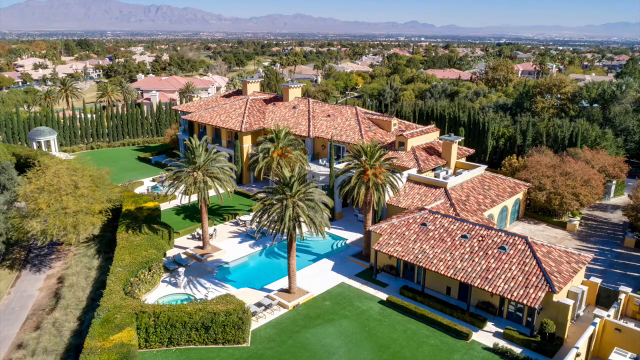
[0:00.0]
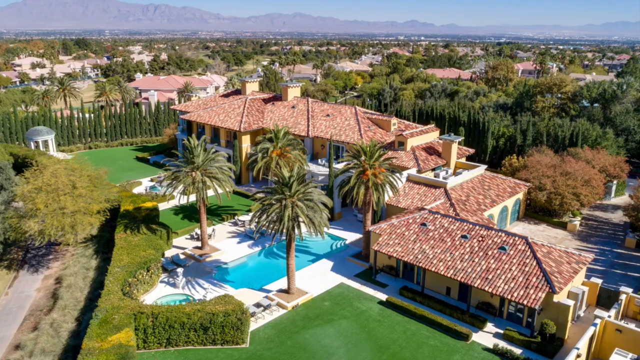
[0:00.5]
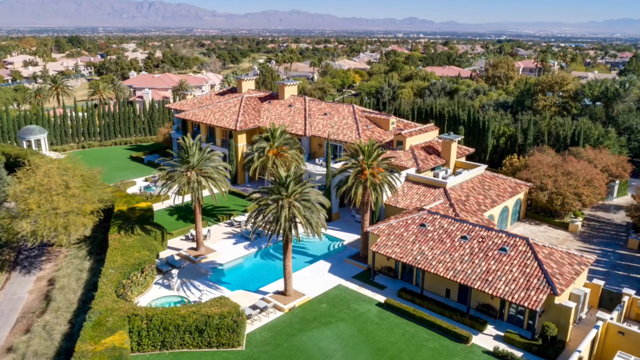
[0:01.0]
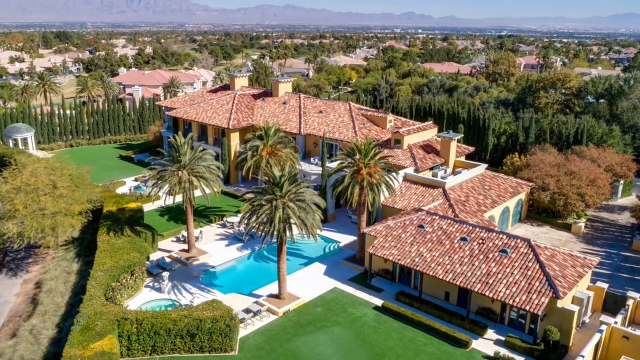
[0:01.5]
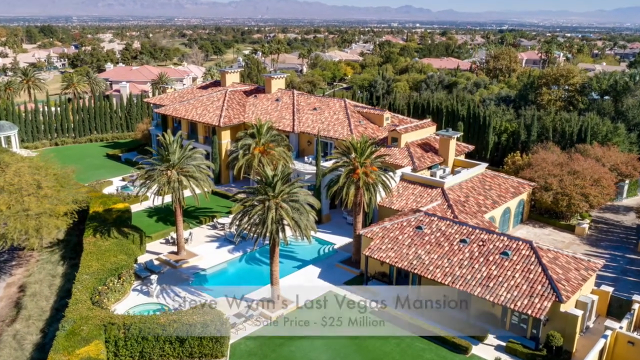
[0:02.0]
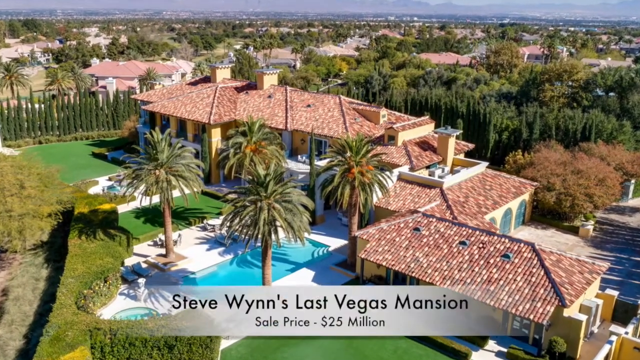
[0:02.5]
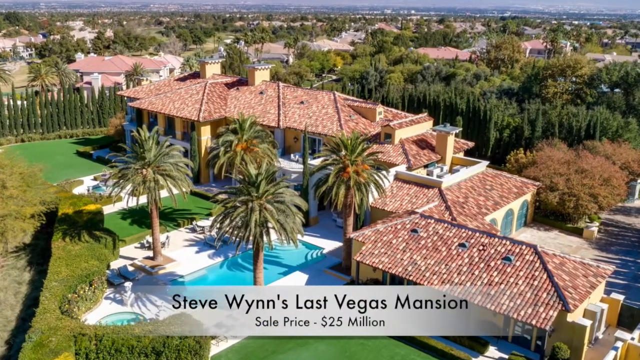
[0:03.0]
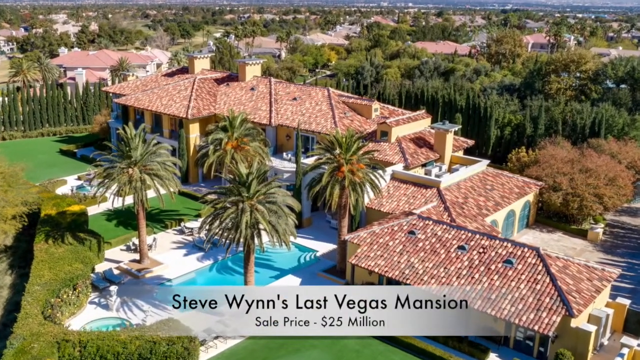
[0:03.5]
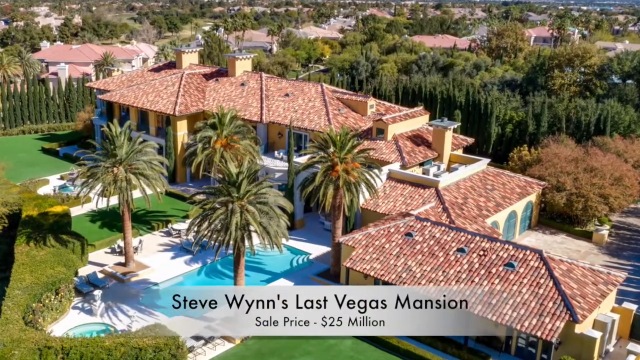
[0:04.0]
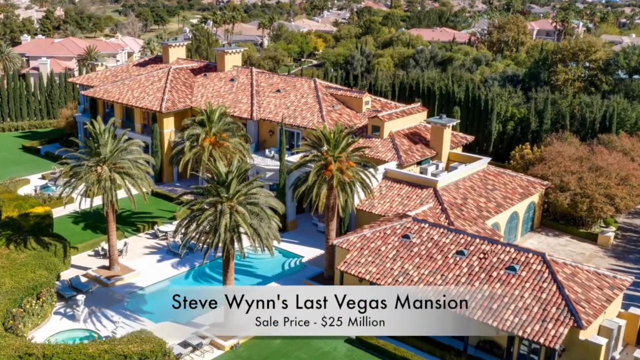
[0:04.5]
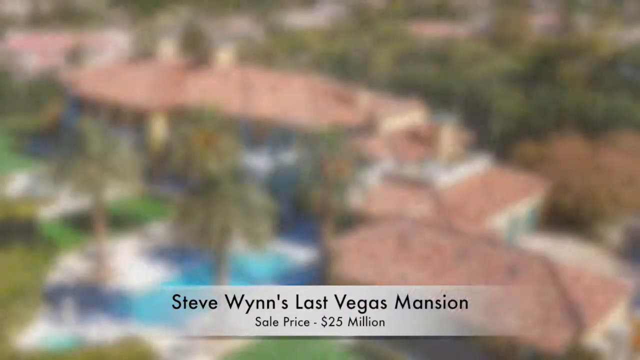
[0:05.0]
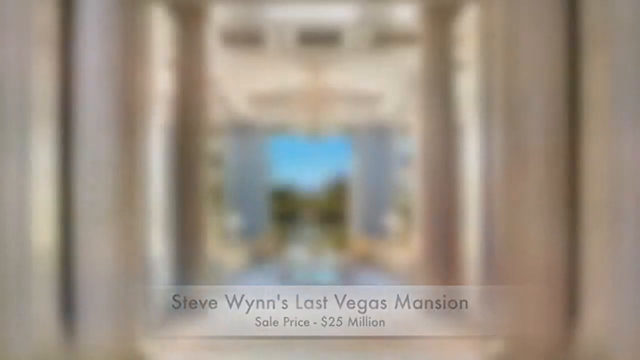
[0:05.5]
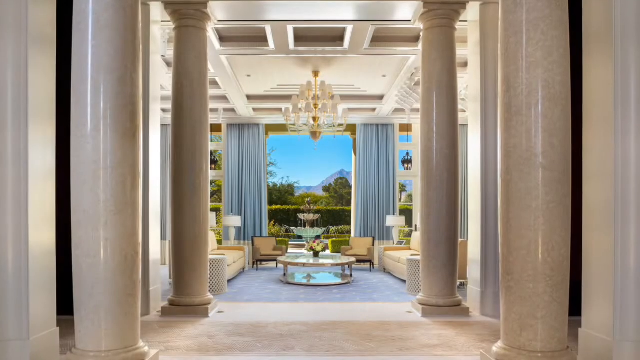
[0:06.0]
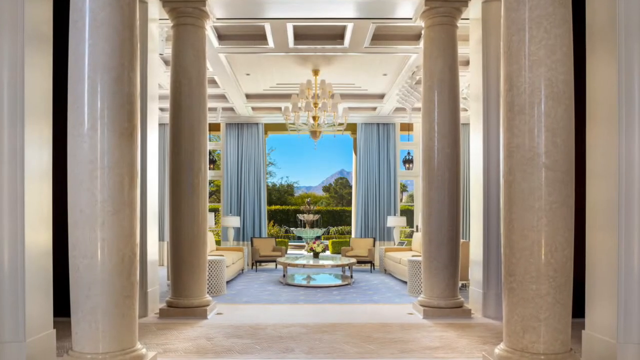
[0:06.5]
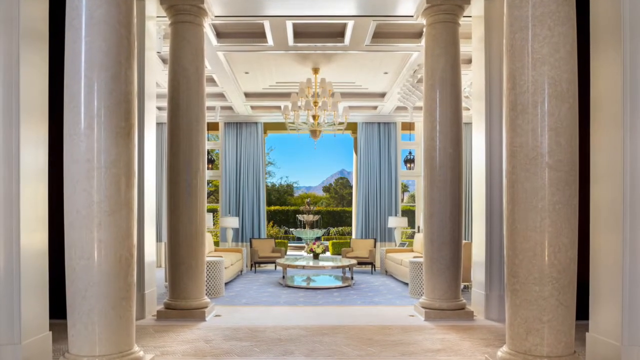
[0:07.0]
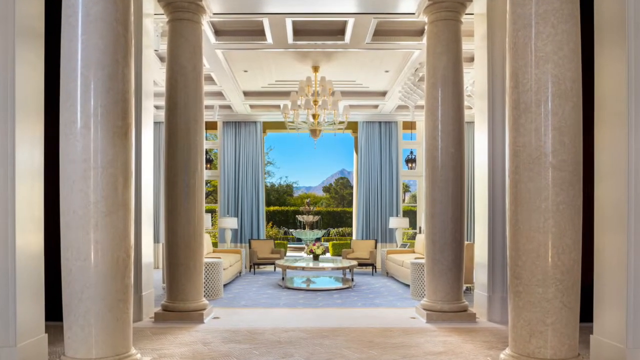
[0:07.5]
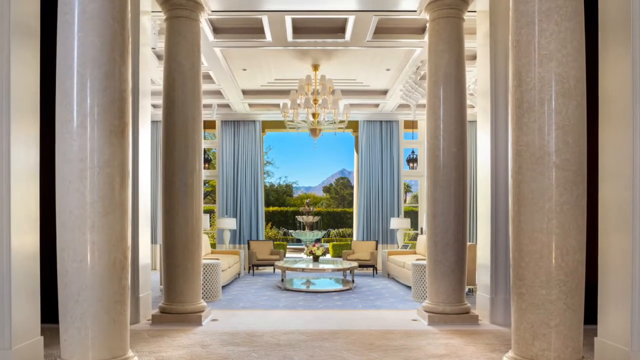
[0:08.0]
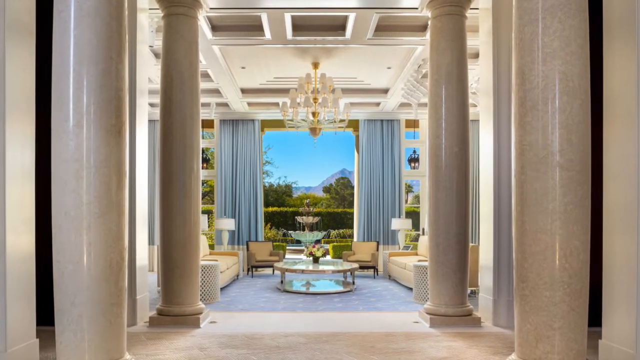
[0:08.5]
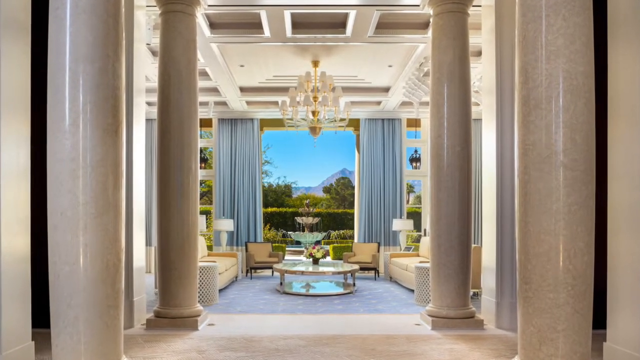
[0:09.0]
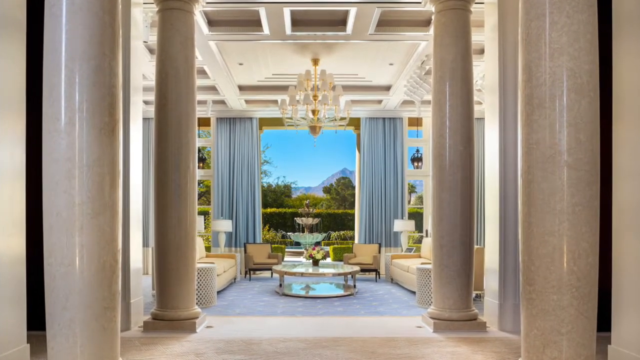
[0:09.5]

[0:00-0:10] An aerial view zooms in on a large, elevated home surrounded by a suburban-looking area in a Mediterranean, almost tropical setting. Four palm trees are architecturally designed into the concrete patio around a pool. The pool is rectangular but modified with angular semi-circle steps. The roof has numerous large chimneys, apparently for fireplaces, with several flues in each chimney, and the tile roof comes in various shades of tan. The backyard is manicured and groomed. The two-story home is very large and looks to be many thousand square feet in floor space. In the distance there is a range of low mountains and a rooftop view of the suburbs. As the camera zooms in, a caption appears at the bottom of the screen: "Steve Wynn's last Vegas mansion. Sale price, 25 million dollars." The view then moves inside the home, looking out through a sitting area with drapes on each side, a cathedral ceiling and two marble pillars. The camera moves into the seating area, which has a circular table with flowers and chairs in an elegant setting. The camera zooms in slowly and pans in, and through an open doorway a multi-tier fountain is visible in a manicured patio setting at the back of the living space.